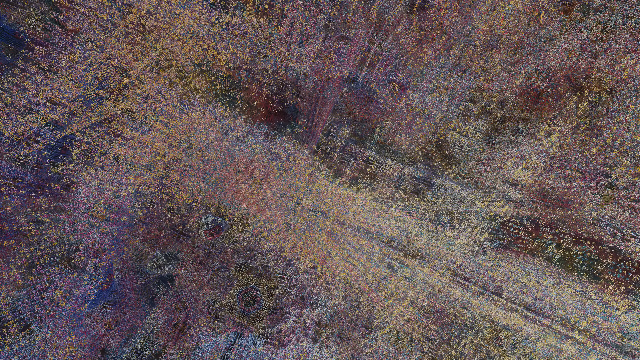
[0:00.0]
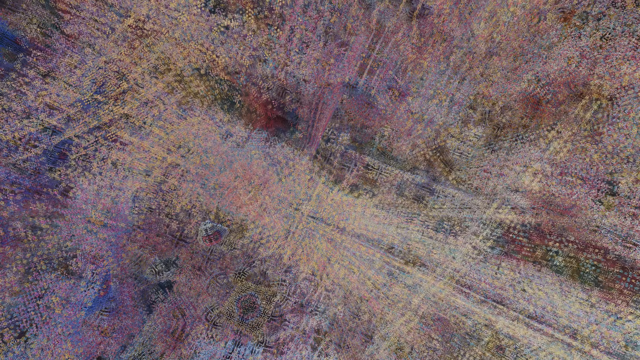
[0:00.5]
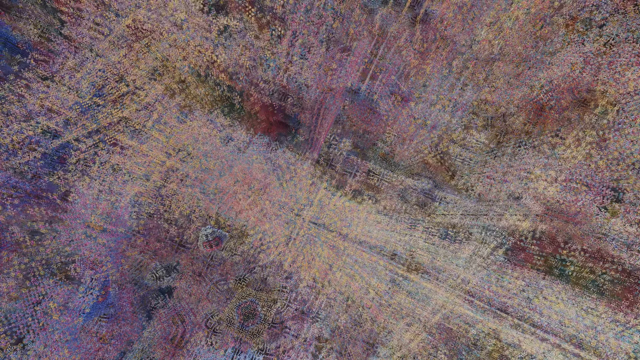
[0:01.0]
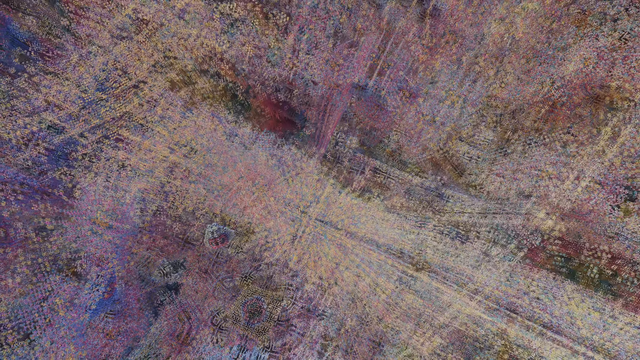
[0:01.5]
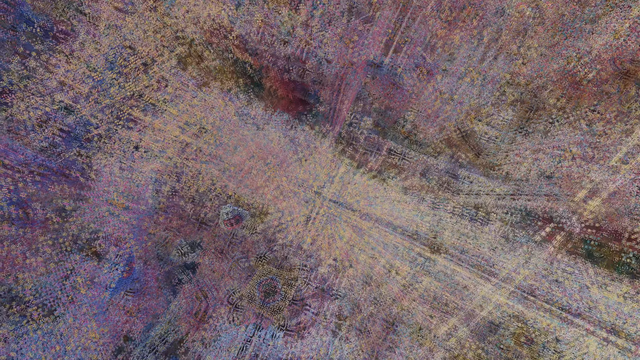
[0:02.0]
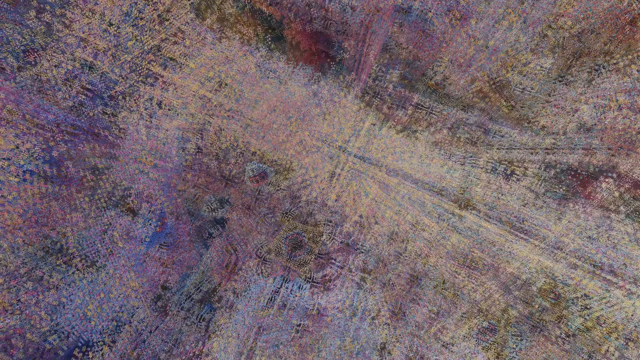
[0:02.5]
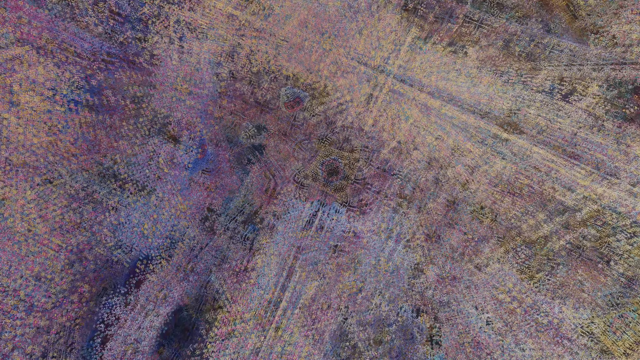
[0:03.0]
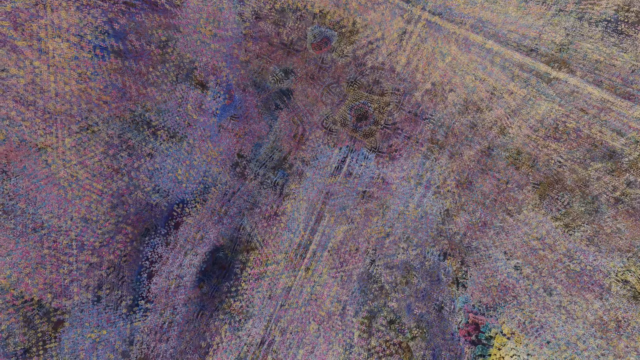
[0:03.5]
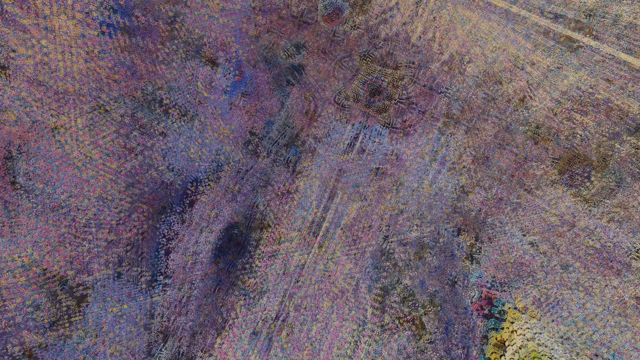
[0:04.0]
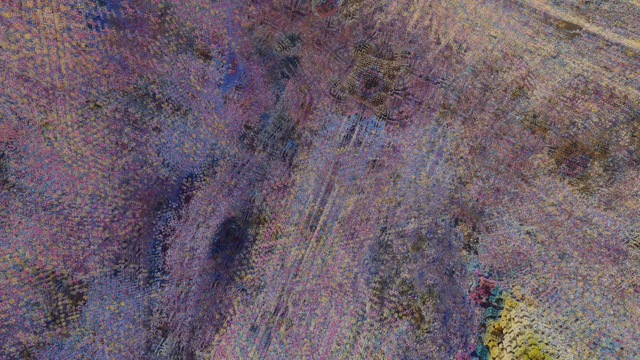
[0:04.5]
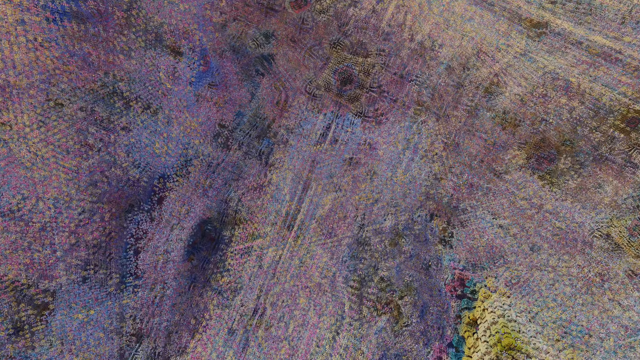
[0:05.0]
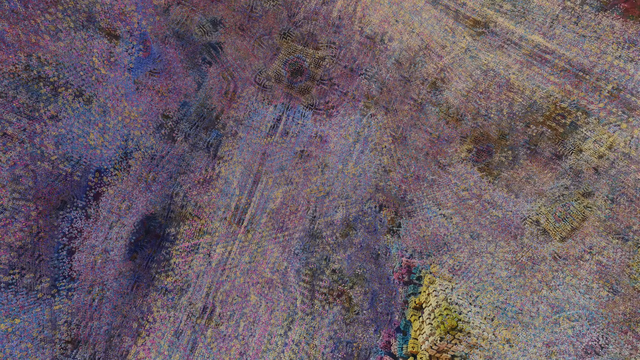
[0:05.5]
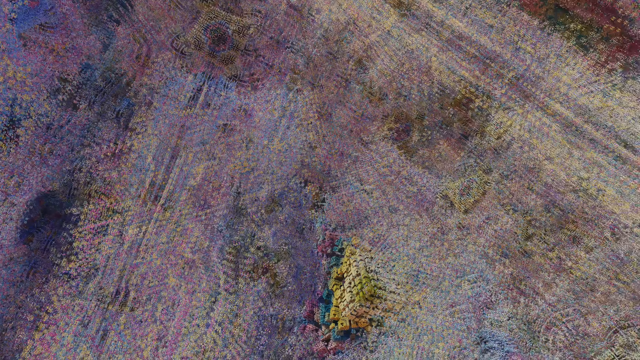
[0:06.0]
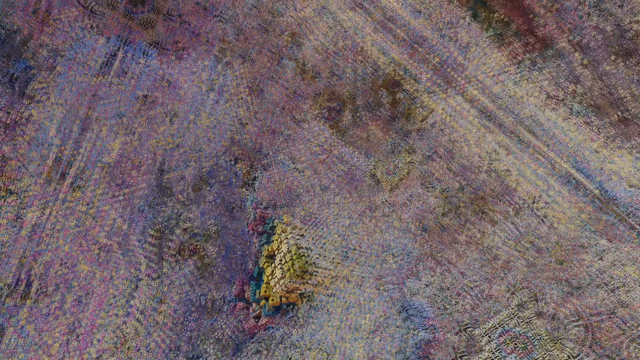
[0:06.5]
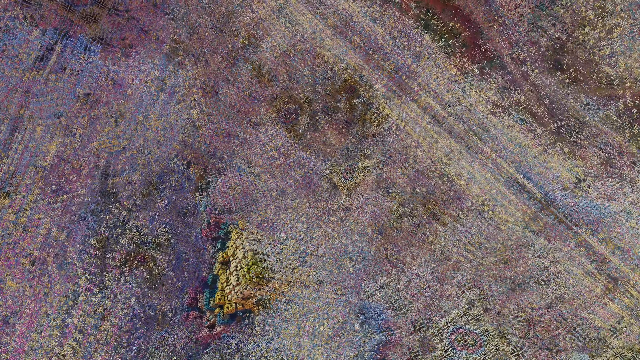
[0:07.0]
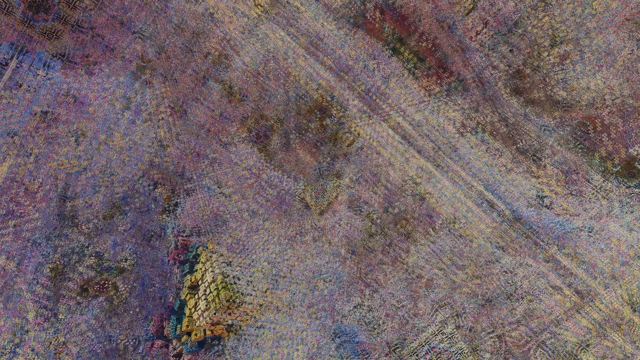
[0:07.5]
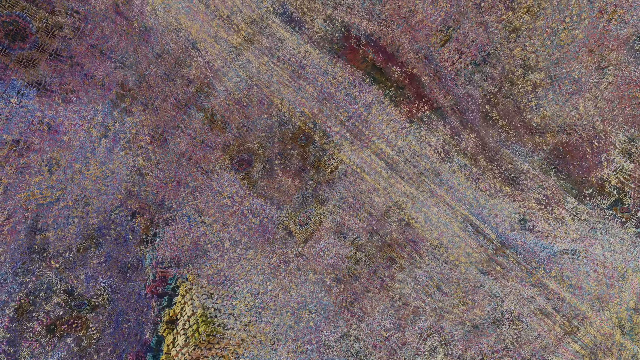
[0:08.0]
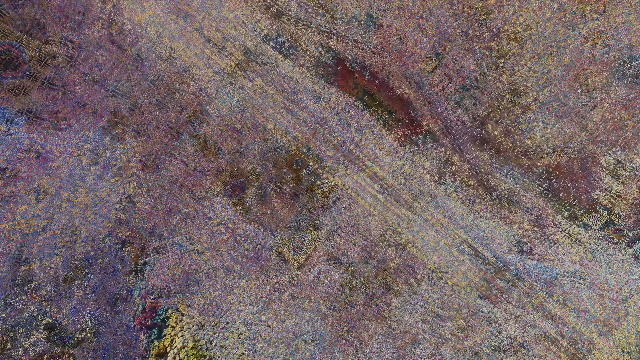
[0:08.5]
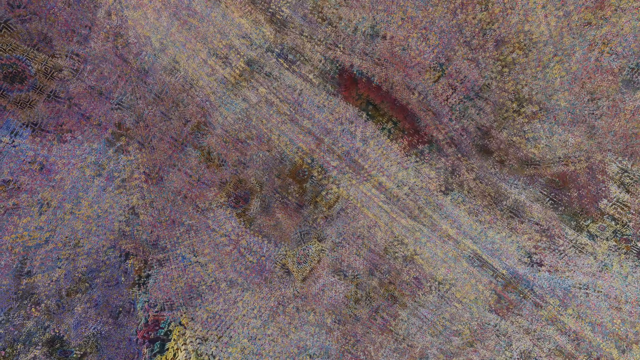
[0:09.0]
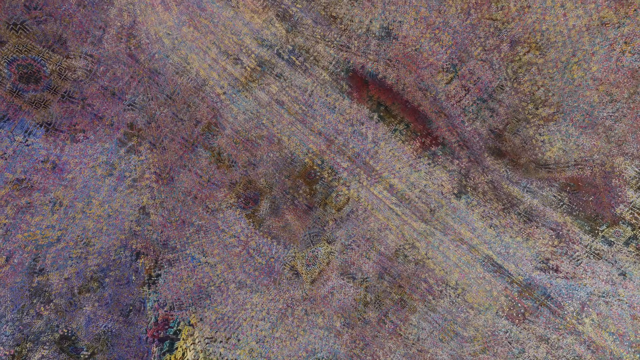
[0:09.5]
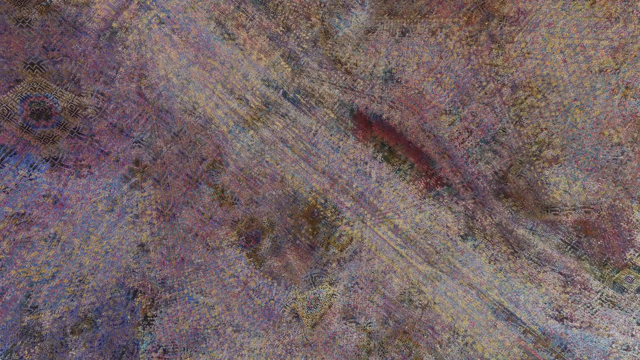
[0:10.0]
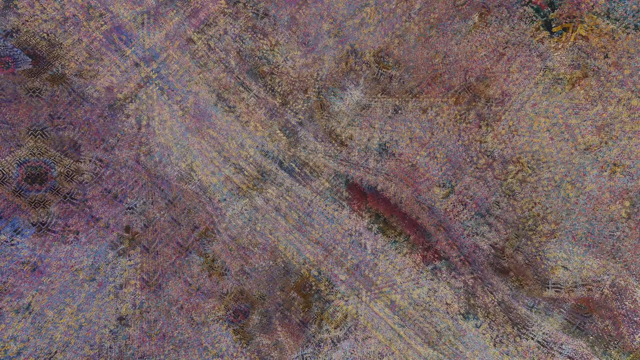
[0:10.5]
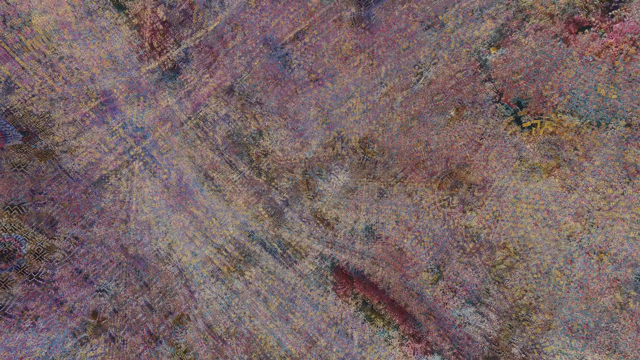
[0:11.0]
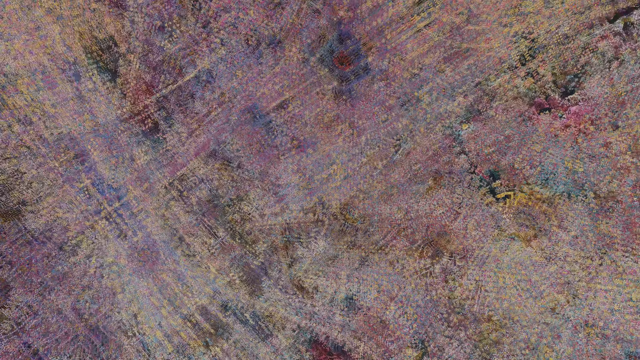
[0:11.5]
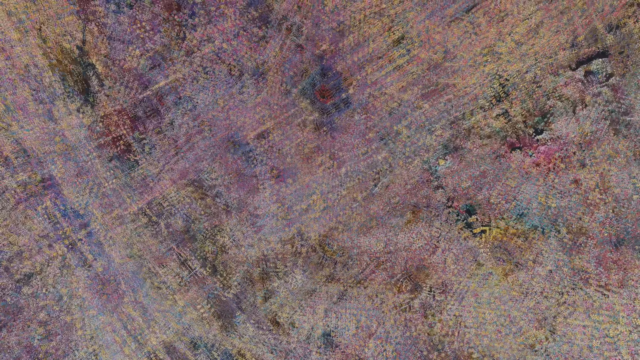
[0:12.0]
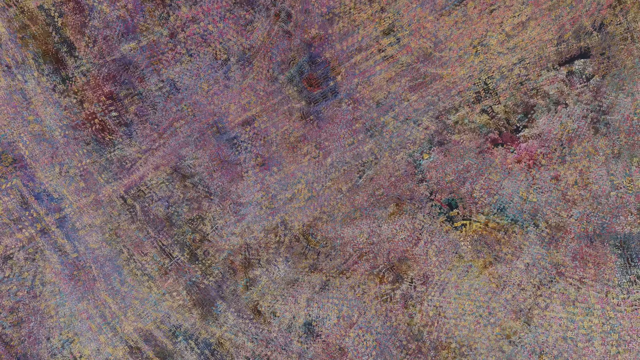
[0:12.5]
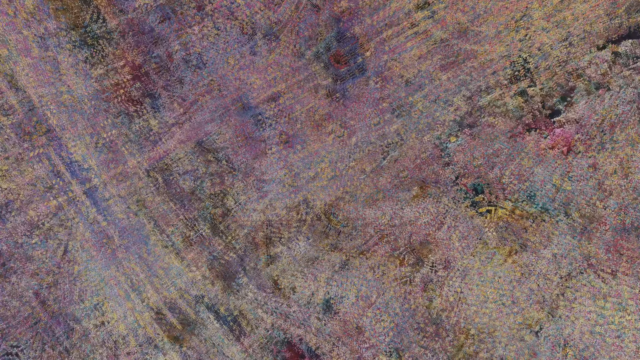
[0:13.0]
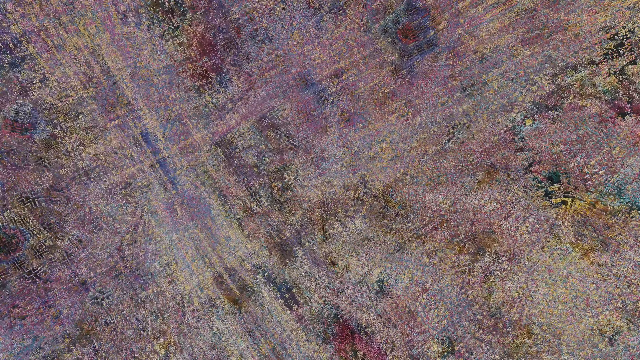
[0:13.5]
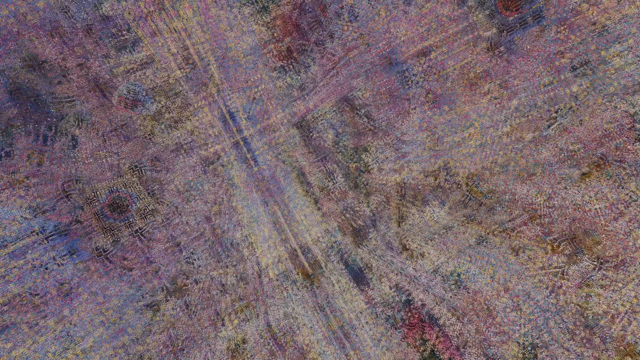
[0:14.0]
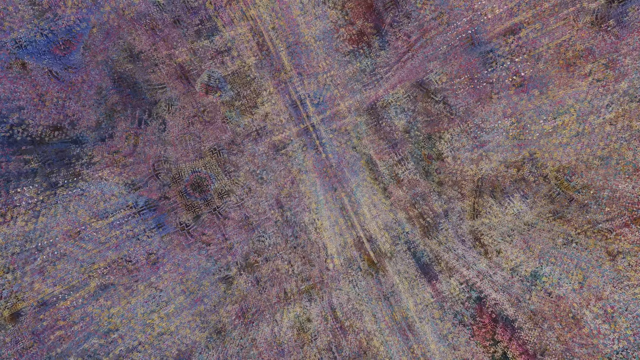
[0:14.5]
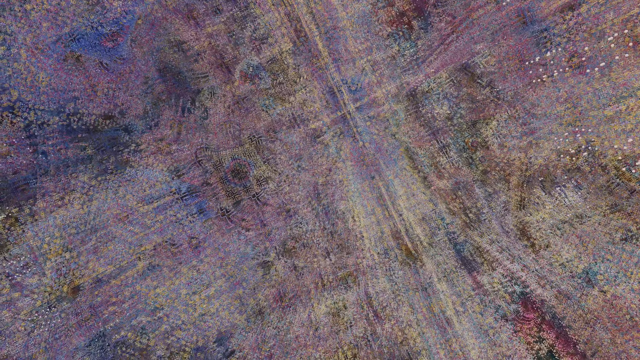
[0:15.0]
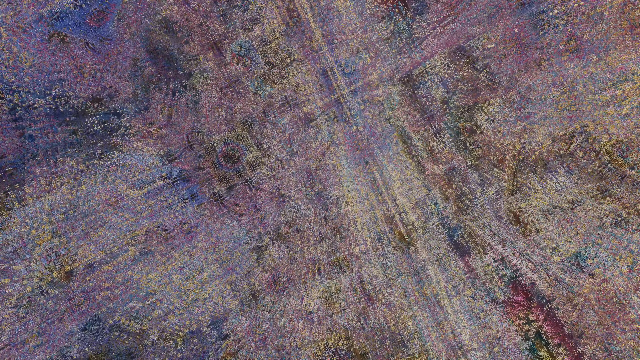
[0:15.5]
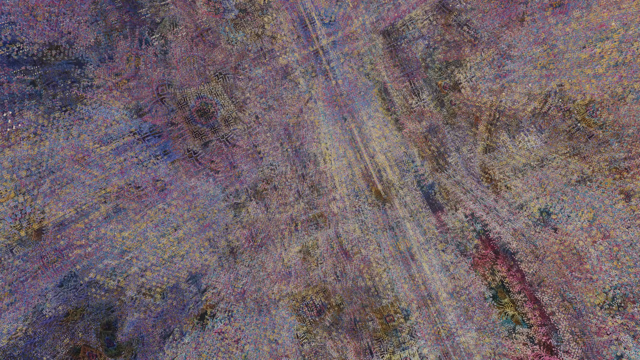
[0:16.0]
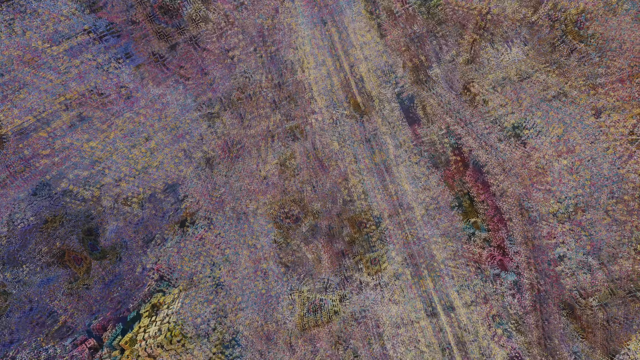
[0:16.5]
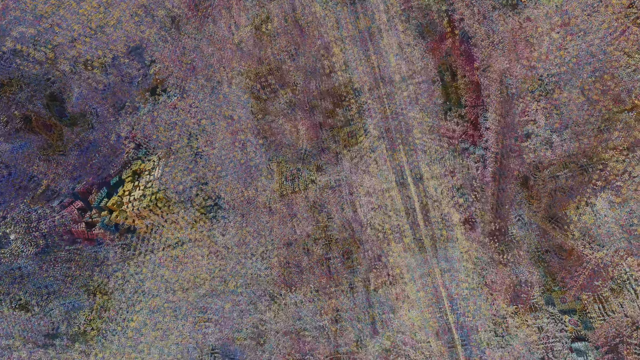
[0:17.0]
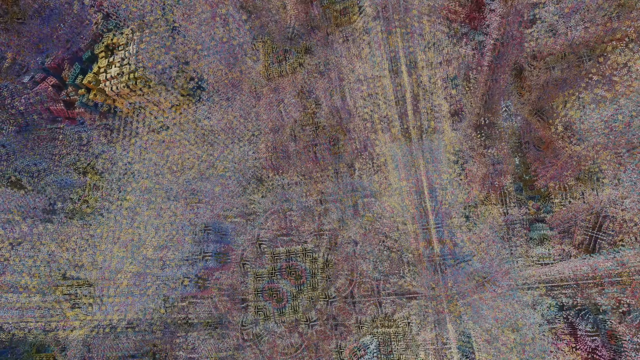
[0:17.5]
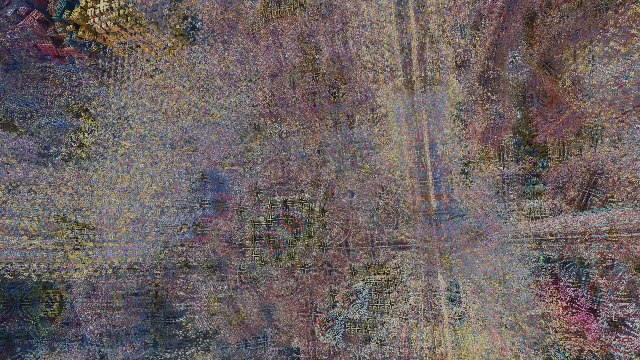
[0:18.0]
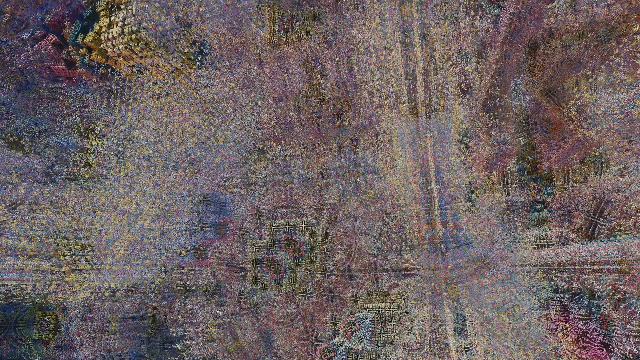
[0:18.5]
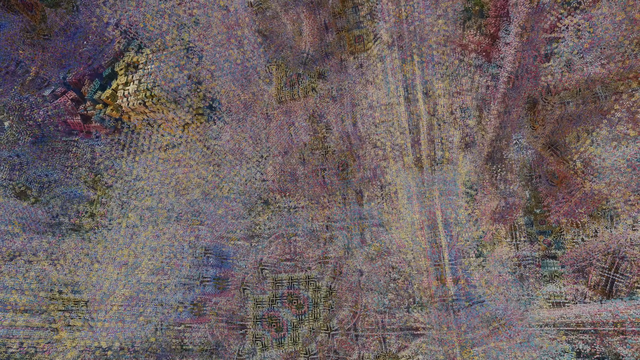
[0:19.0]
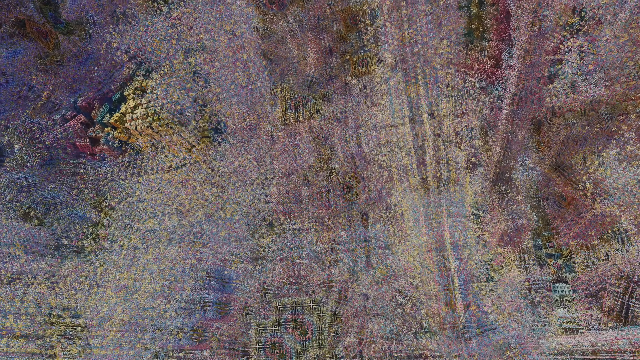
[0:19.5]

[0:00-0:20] The view is kind of an overhead, bird's-eye view of sorts, almost like a kaleidoscope of colors in a kind of funky, psychedelic design with shades of plum, lavender and brown. Toward the right middle there is a square that looks like a brown floral design, kind of centered on a purple flower design. Toward the bottom on the right side are shades of tan, blue and purple. The view is kind of panning the whole way. It is difficult to make out what this is; it almost looks like a close-up of possibly paint on a tapestry. There is a shimmering effect toward the right side of the image. The camera continues to pan up, showing shades of purple, lavender, brown, blues and whites. It kind of looks almost like a sci-fi tunnel effect, like going through a tunnel of kaleidoscope colors, with floral patterns throughout the trippy design.